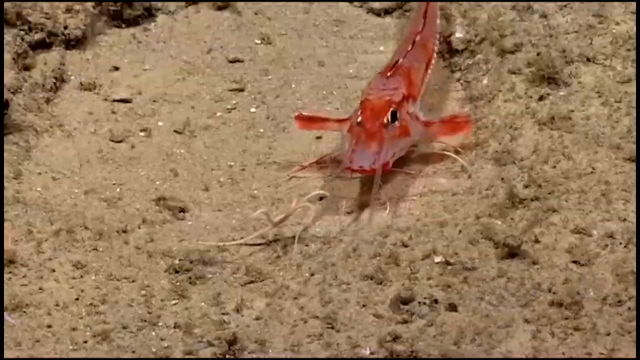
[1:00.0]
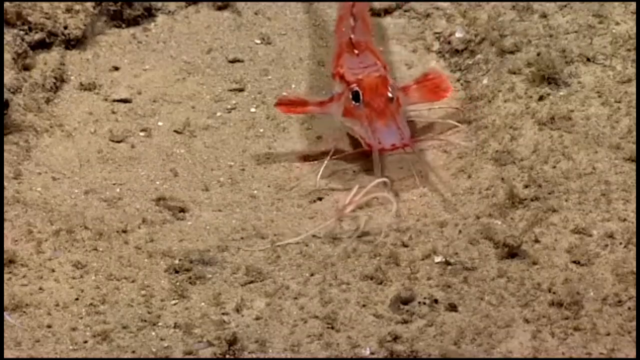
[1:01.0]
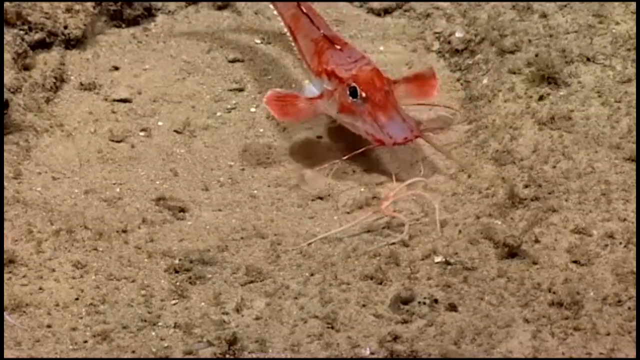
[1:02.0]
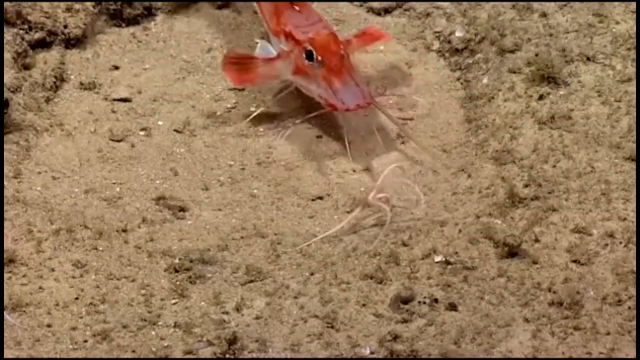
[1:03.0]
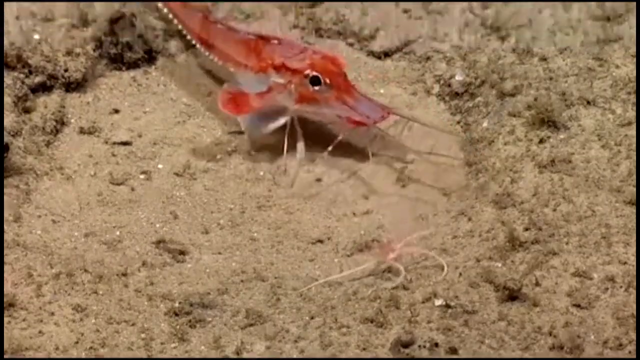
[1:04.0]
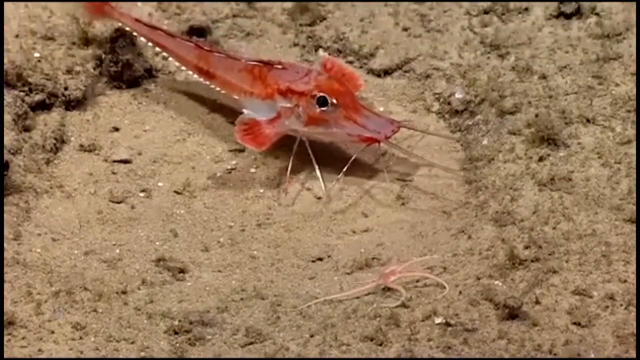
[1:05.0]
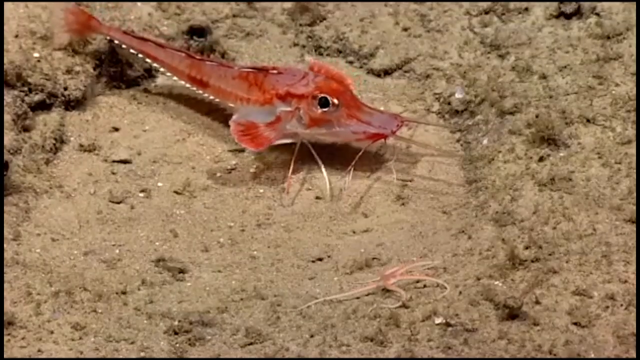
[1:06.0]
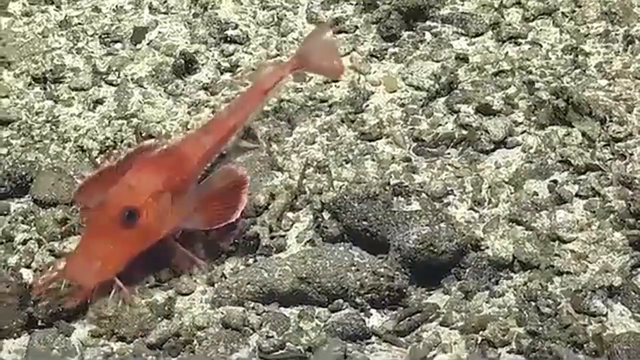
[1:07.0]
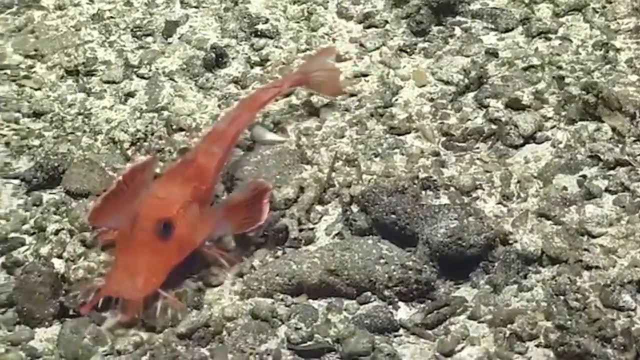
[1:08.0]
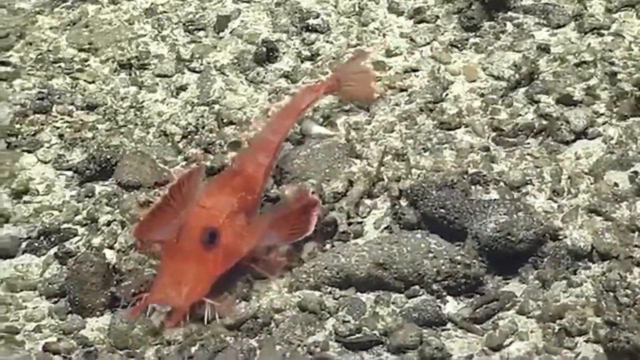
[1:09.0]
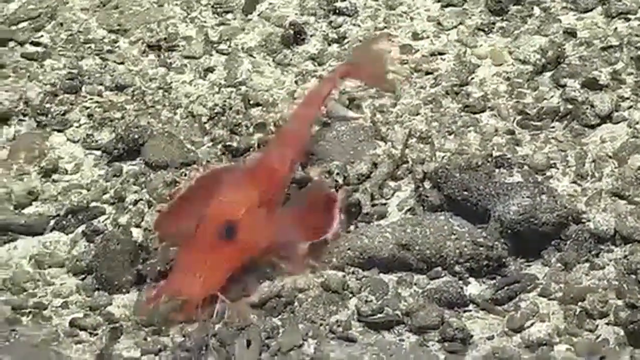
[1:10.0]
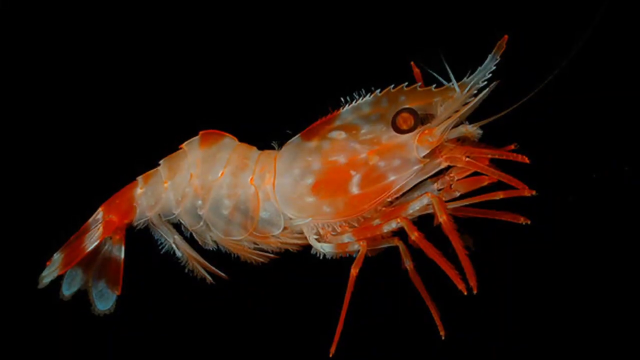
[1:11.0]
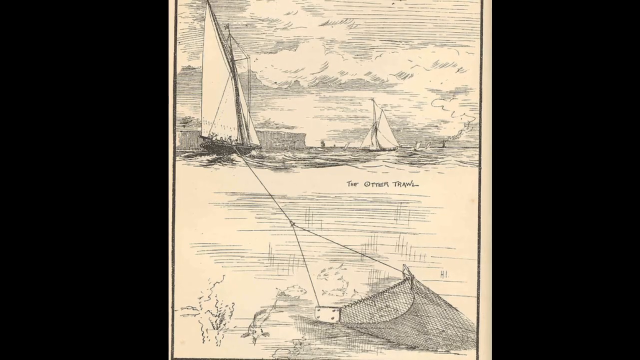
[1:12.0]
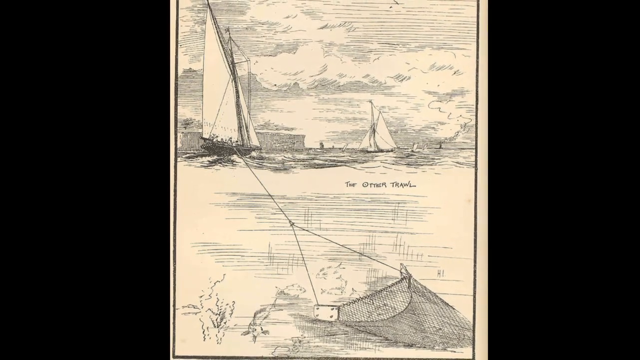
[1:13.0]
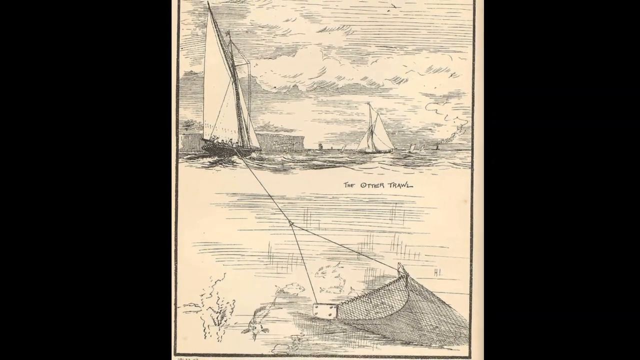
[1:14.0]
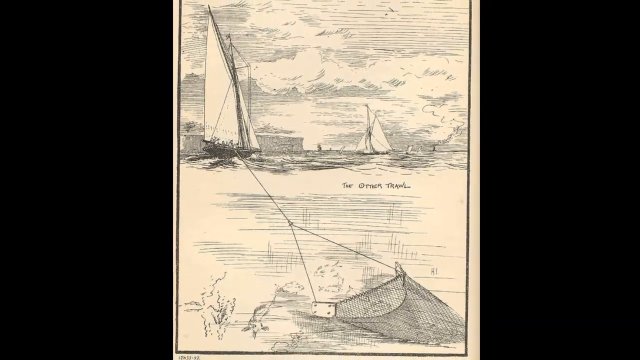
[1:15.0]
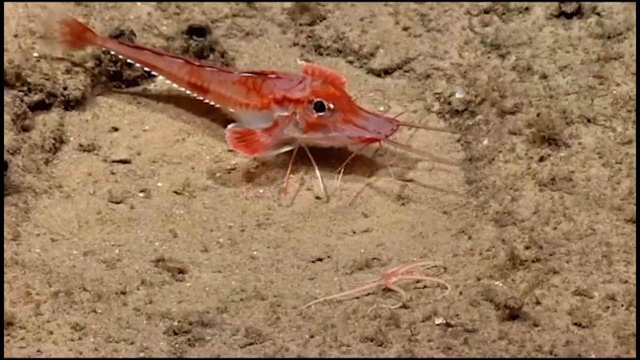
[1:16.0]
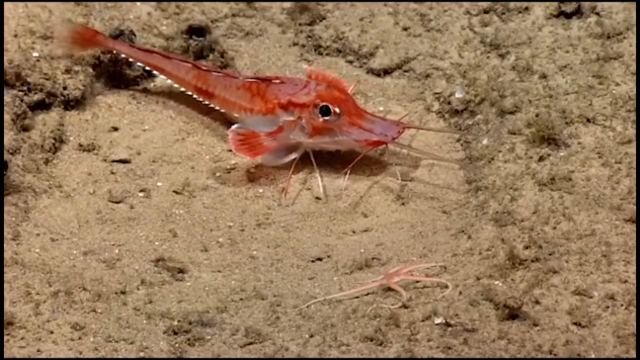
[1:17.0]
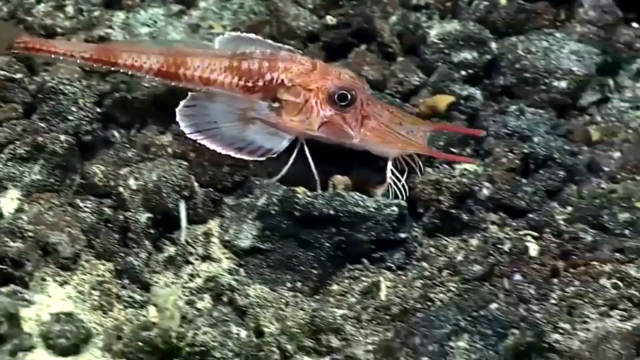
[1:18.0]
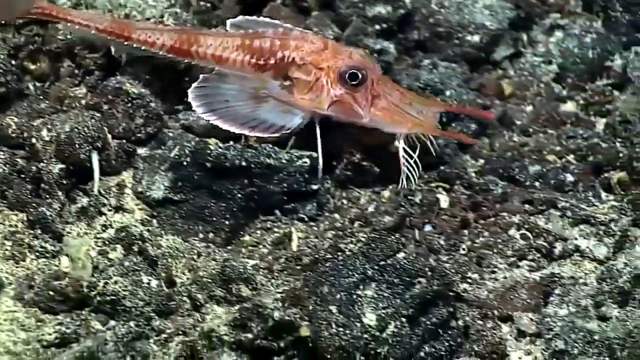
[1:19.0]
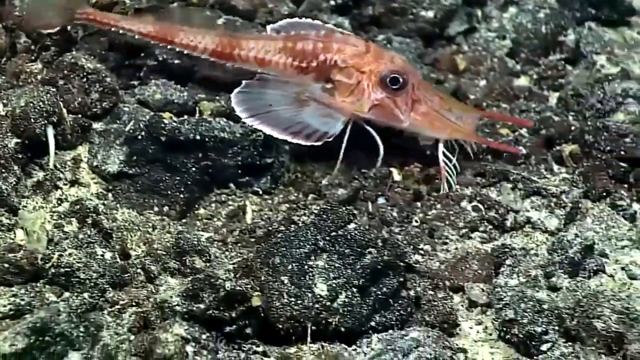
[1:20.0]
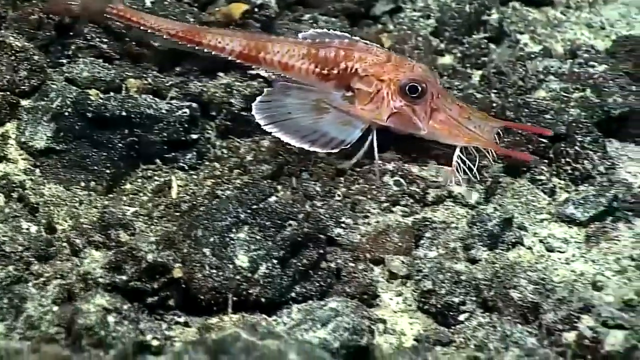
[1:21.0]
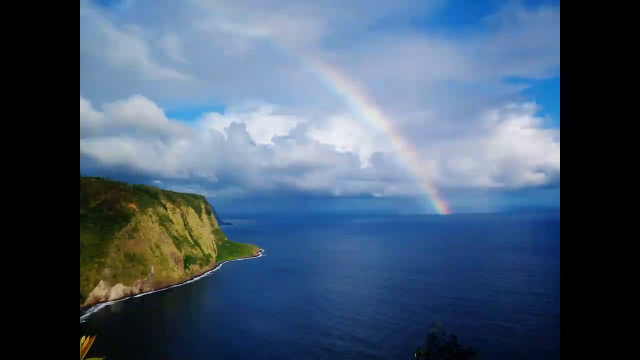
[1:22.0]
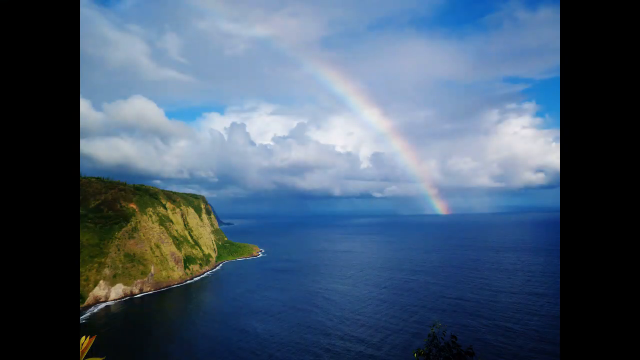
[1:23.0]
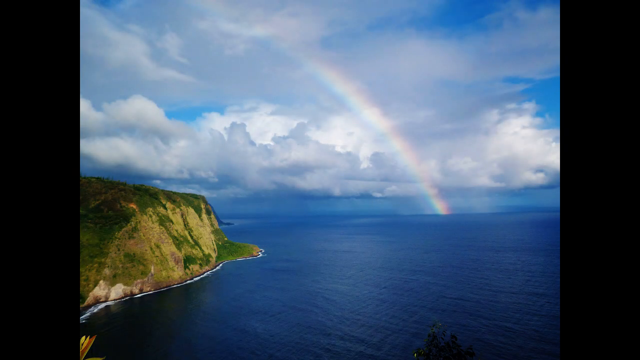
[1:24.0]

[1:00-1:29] The fish continues to be shown against the sandy background, its eyes approximately facing the screen and its fins extended outwards to the left and right. It floats upwards from the sandy seafloor as it rotates to the right, showing its right eye and facing the right side of the screen, then backs up with its fins and tail fin. New footage shows the fish with its fins retracted, gliding across a green-tinted rocky ocean floor as it waves its tail. Next, the fish is shown glowing red, orange and white against a fully black background. A manuscript with a drawing of a sailboat appears, then the camera zooms out and shows another image or clip of the fish against a sandy background near the top of the screen, facing right, its spines visible. The shot changes again to another fish, much more white with faded red and orange accents, facing right against a dark rocky background. It has white protrusions on the bottom of its body that look like legs, and it walks across the ocean floor with them. The video then transitions to a landscape image of an ocean with rainbow clouds and land on the left side of the screen before the video ends.